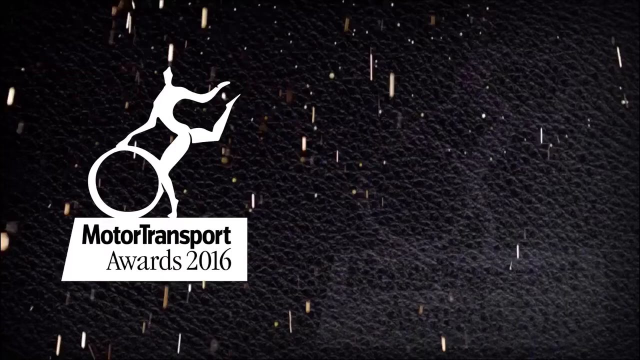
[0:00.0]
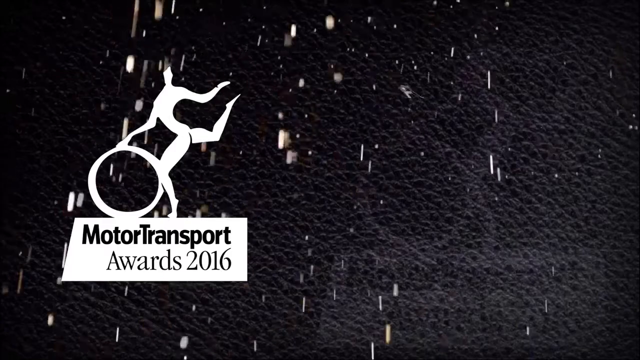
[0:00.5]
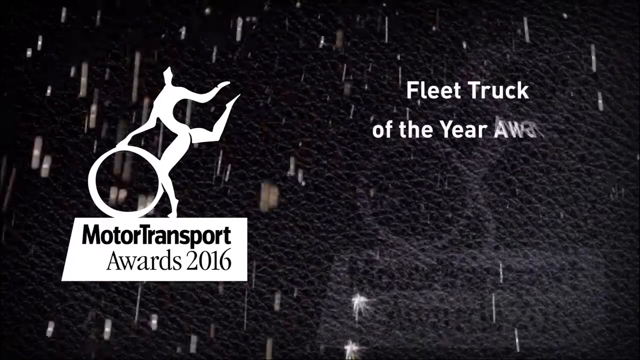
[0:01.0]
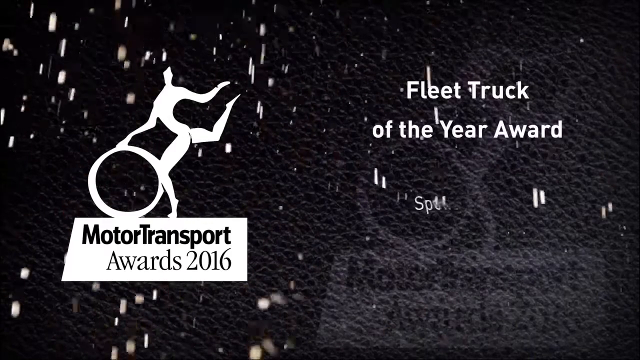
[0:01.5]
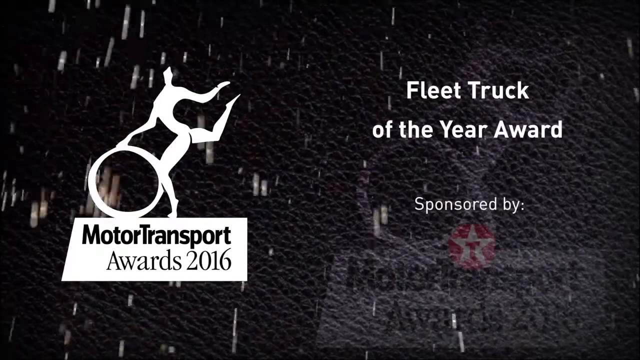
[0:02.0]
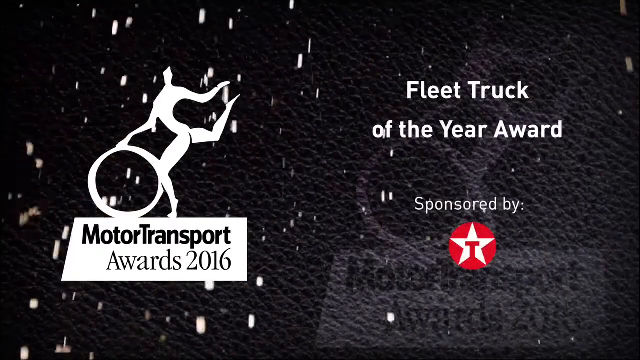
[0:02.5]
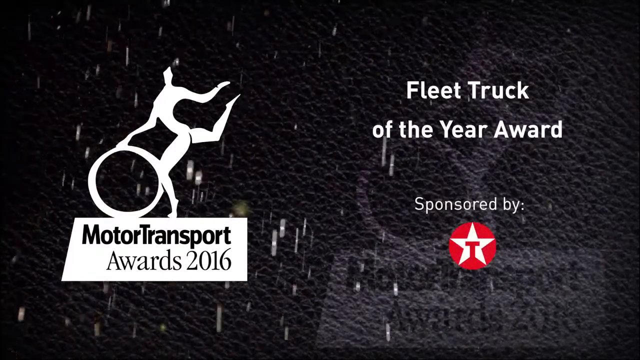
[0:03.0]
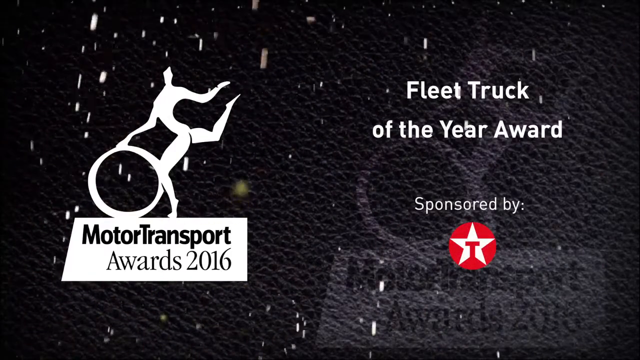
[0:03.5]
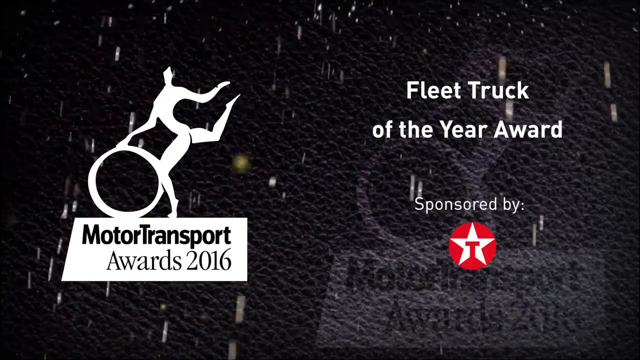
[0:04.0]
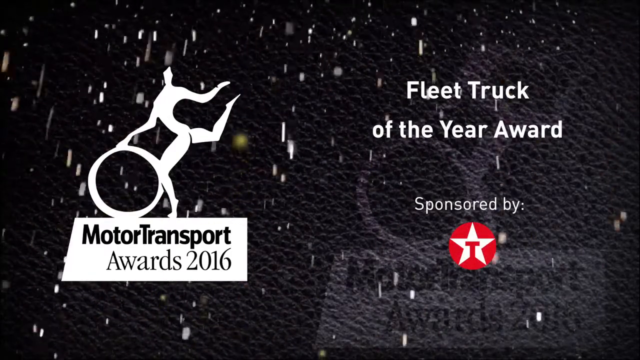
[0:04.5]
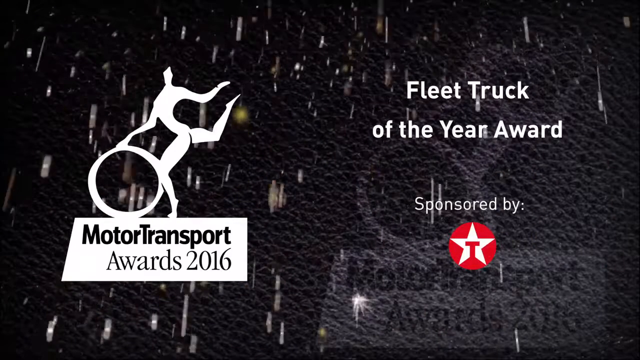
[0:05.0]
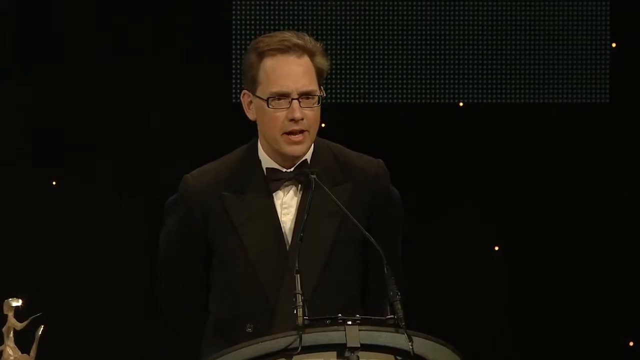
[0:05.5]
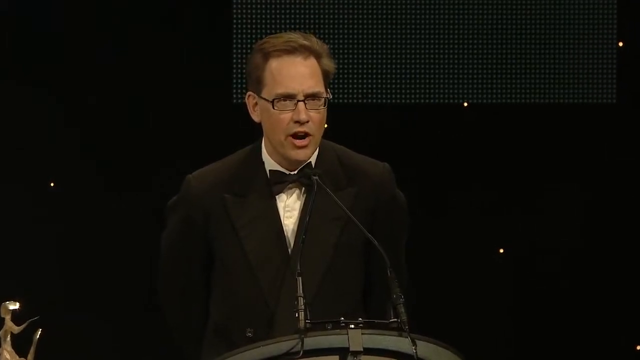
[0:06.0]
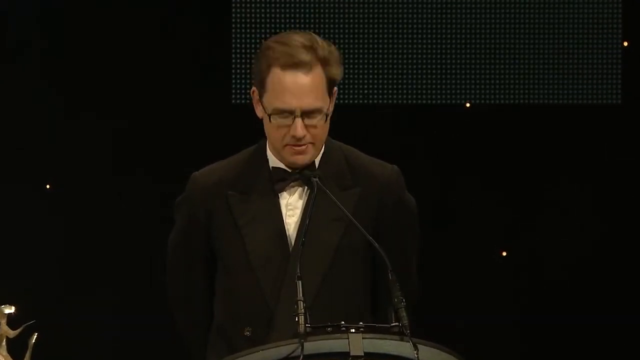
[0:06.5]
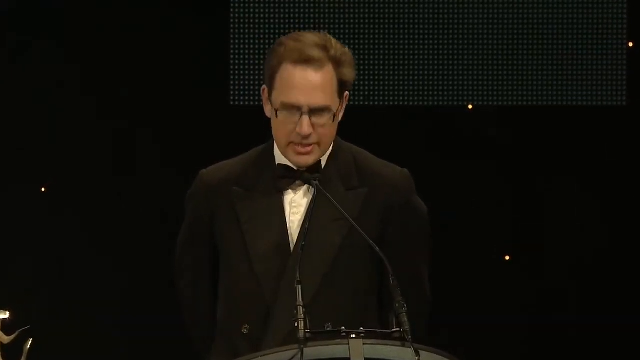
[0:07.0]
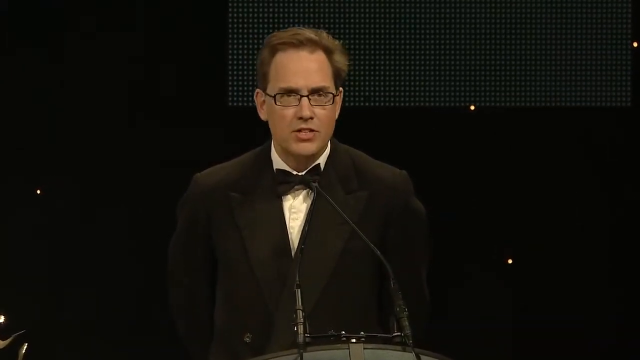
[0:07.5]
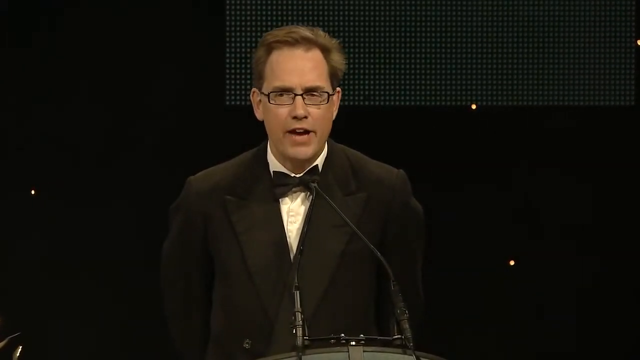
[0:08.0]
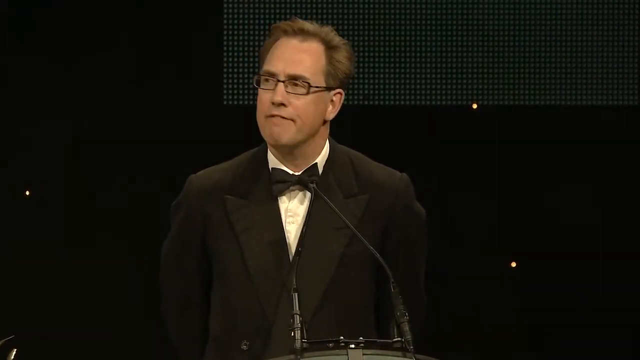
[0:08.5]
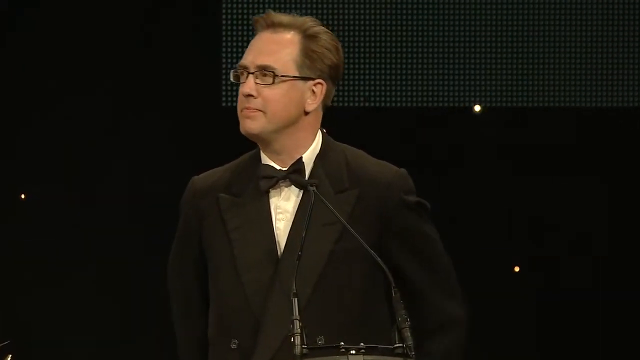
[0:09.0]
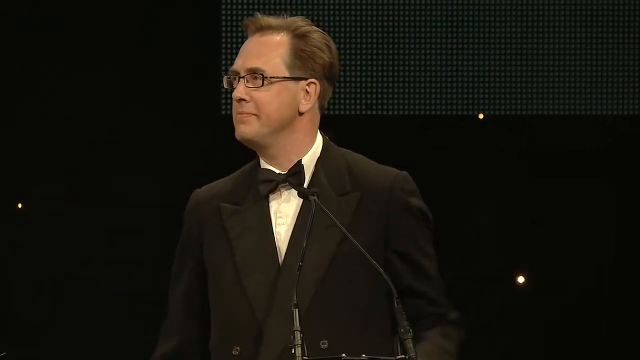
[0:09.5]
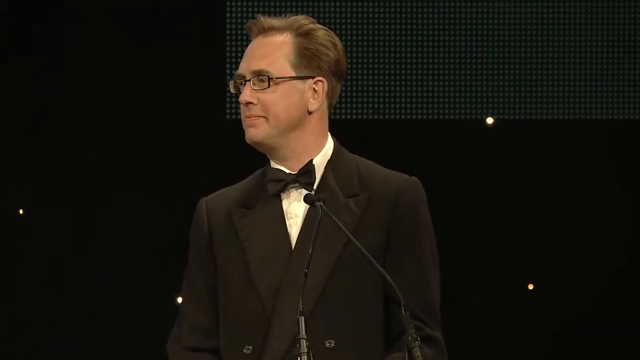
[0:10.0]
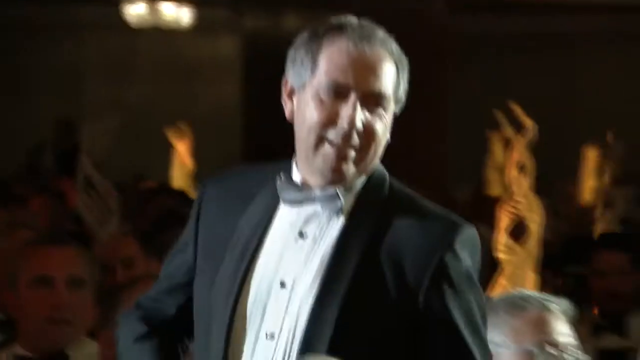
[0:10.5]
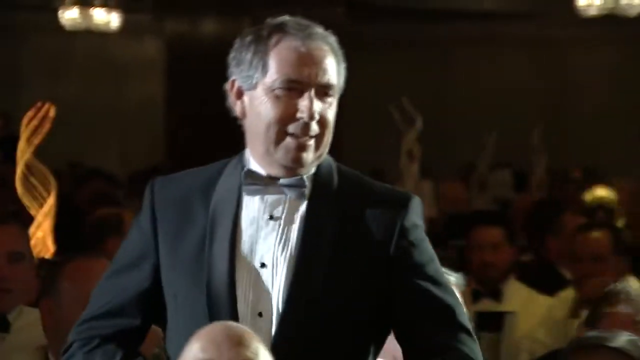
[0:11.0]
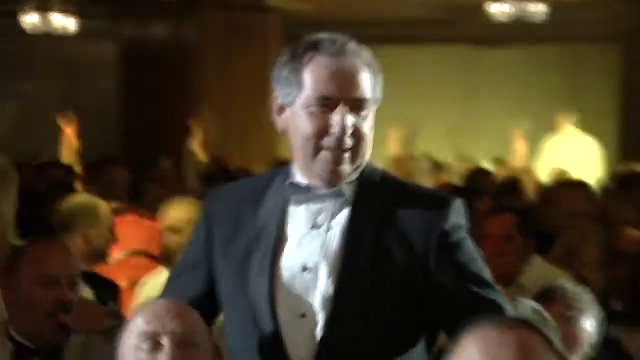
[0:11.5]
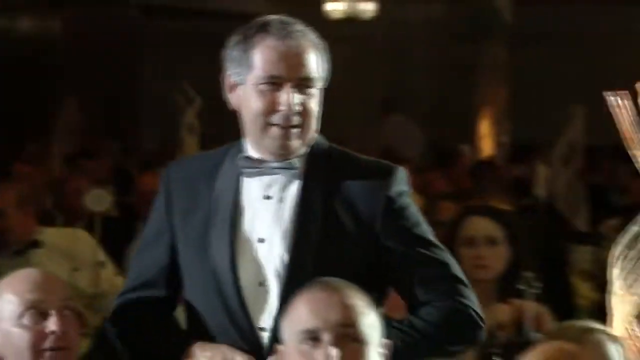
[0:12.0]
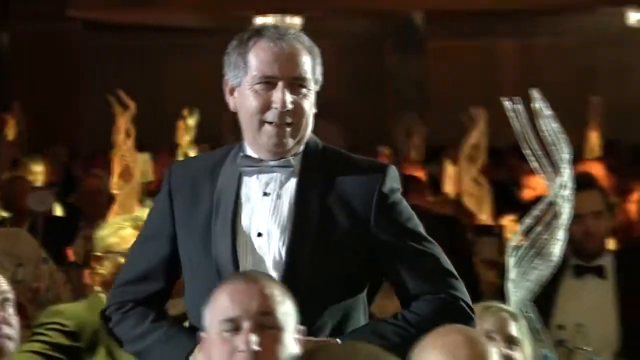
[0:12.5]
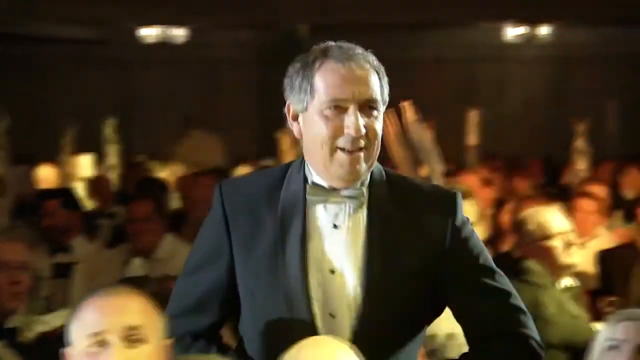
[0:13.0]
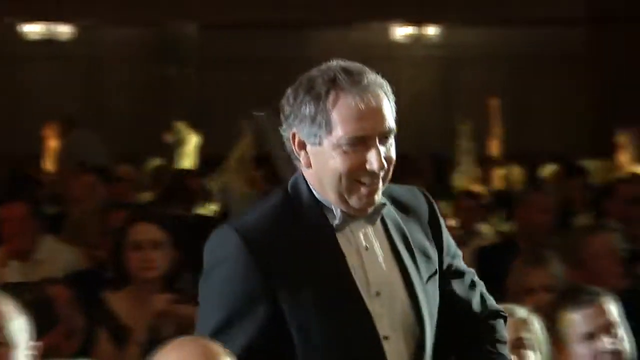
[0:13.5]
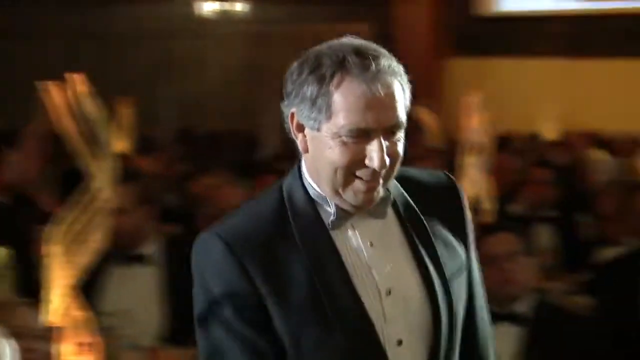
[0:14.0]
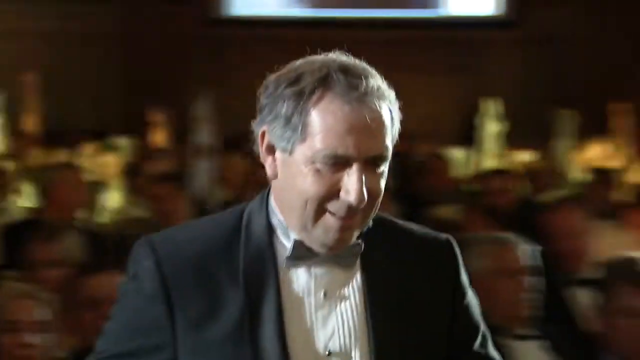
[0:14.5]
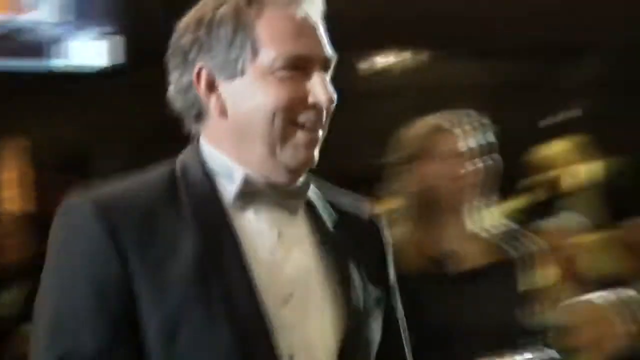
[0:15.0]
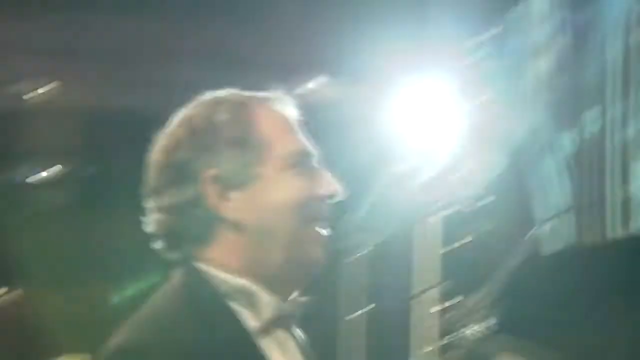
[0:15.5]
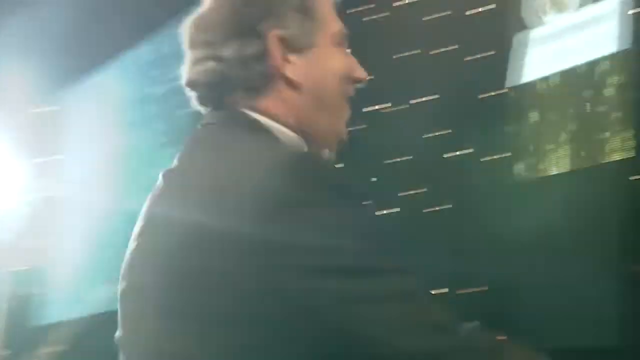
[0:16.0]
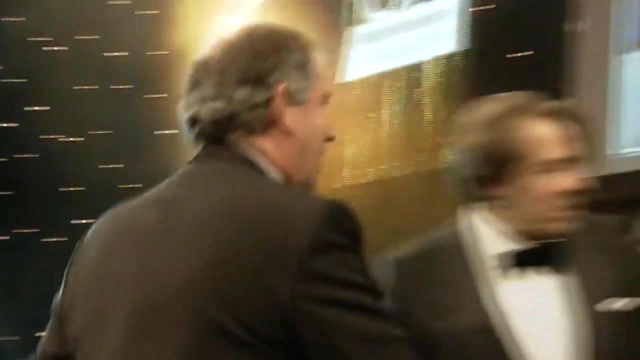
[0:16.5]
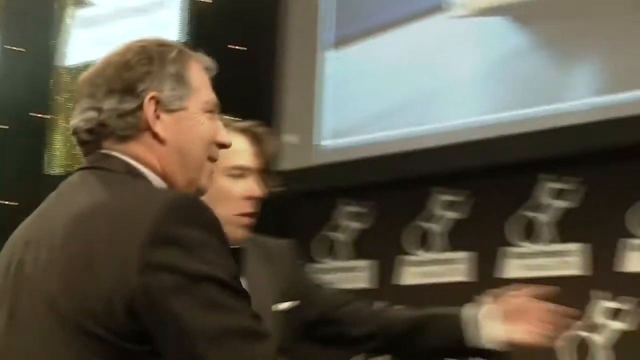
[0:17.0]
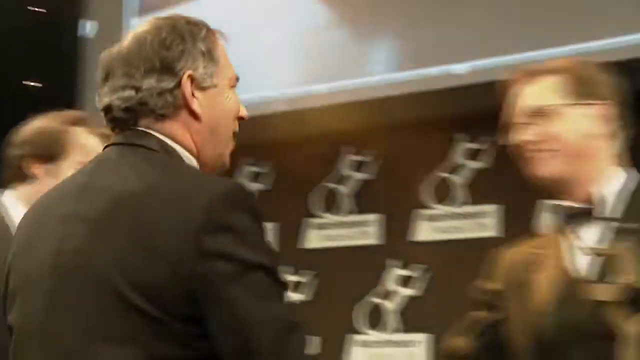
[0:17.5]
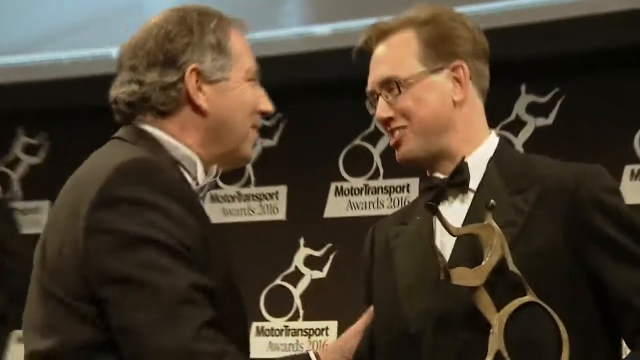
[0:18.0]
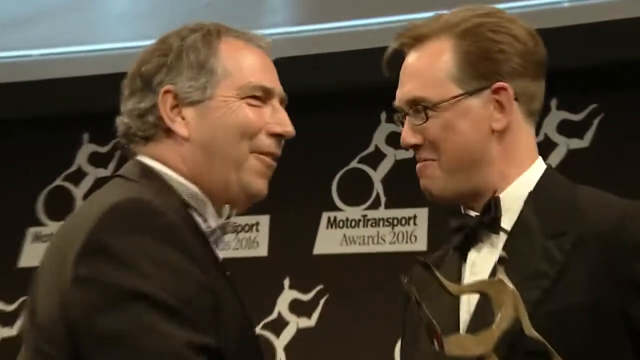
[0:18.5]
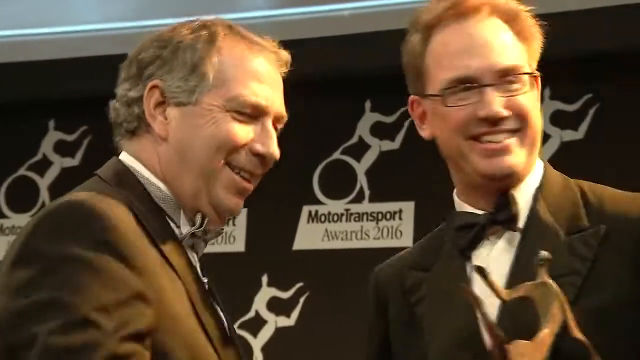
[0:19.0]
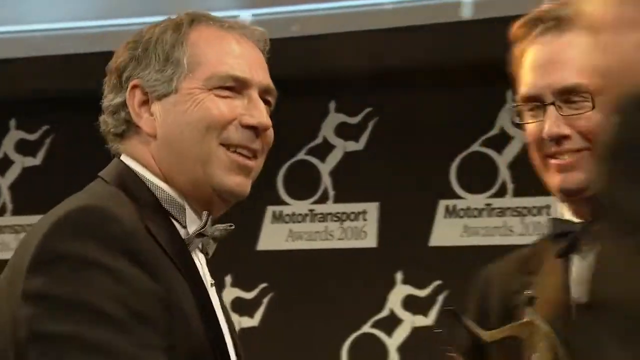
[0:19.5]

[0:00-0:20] The video opens with a logo reading "Motor Transport Awards 2016". The background looks like leather or something similar, and rain falls in the foreground. There is also a logo of a running person, perhaps moving a wheel. Text then appears reading "fleet truck of the year award", sponsored by the letter T. The scene switches to a man with dark hair and glasses, wearing a black tuxedo, a white shirt and a black bowtie, standing at a podium on a stage. He appears to be introducing someone at an awards banquet of some sort. The video then cuts to a man in the audience with gray hair, wearing a black suit or tuxedo, a white shirt and a gray bowtie. He goes up onto the stage and shakes hands with the announcer who introduced him.